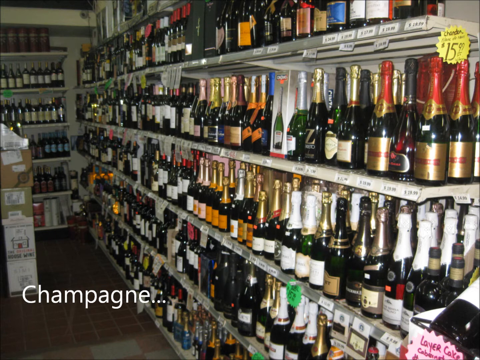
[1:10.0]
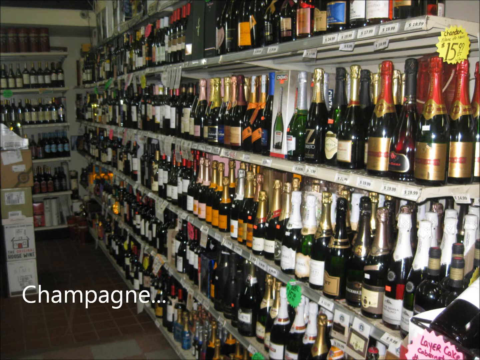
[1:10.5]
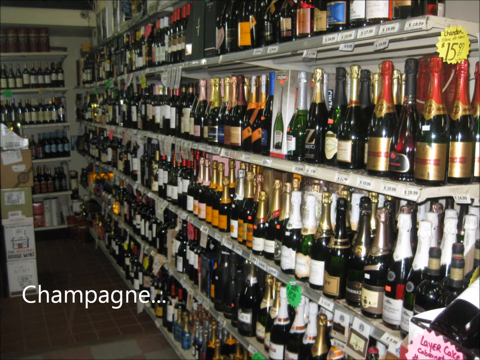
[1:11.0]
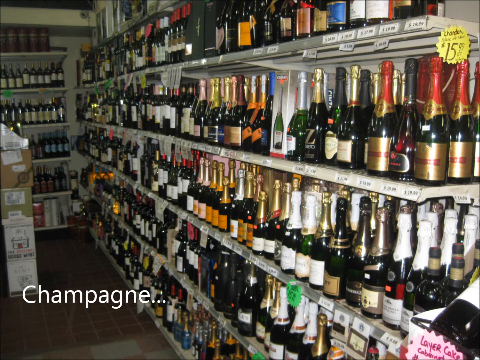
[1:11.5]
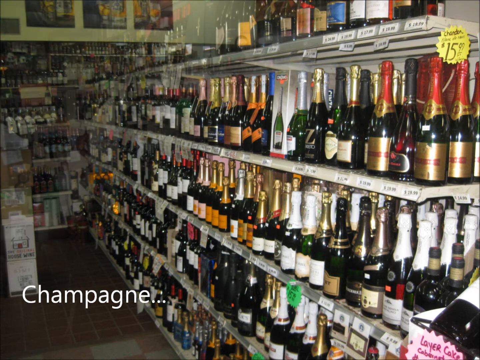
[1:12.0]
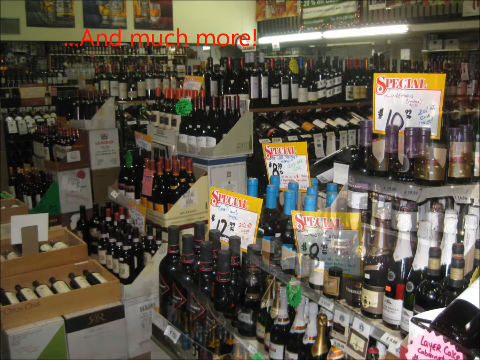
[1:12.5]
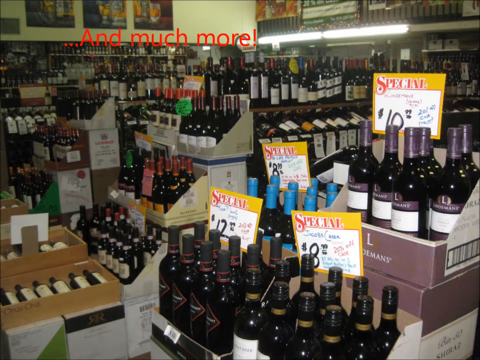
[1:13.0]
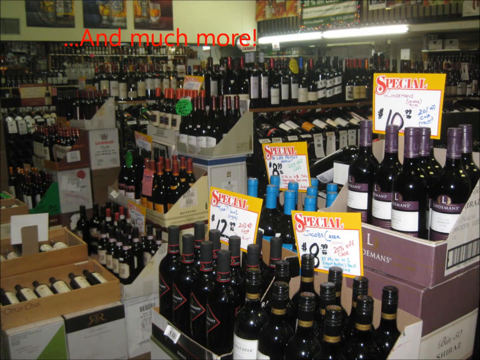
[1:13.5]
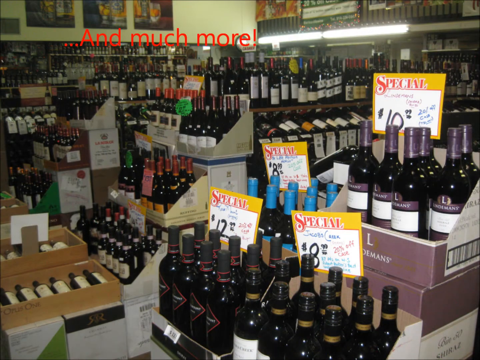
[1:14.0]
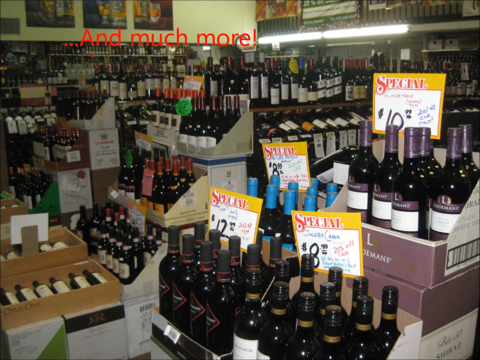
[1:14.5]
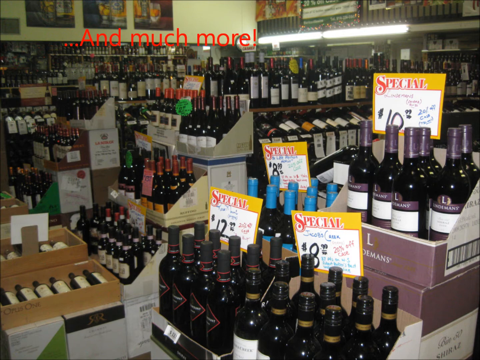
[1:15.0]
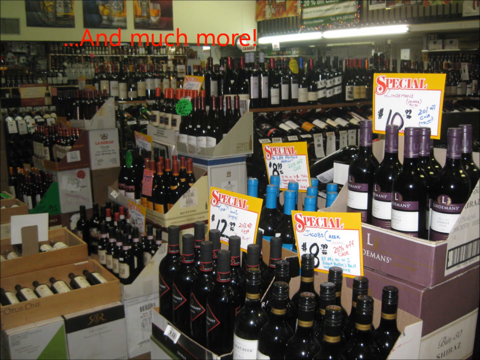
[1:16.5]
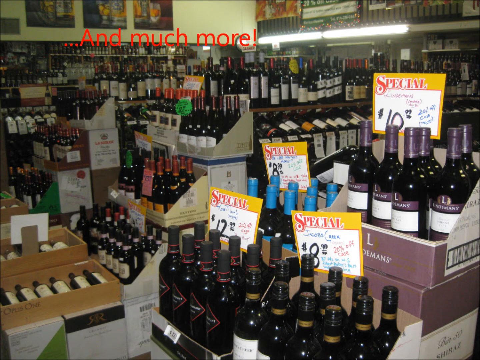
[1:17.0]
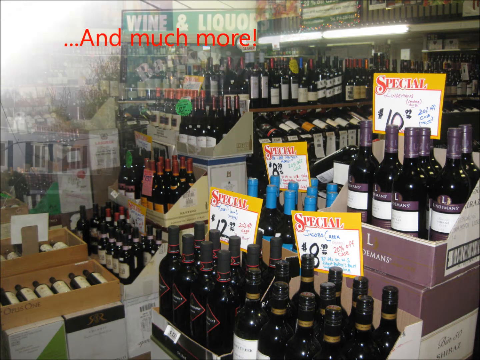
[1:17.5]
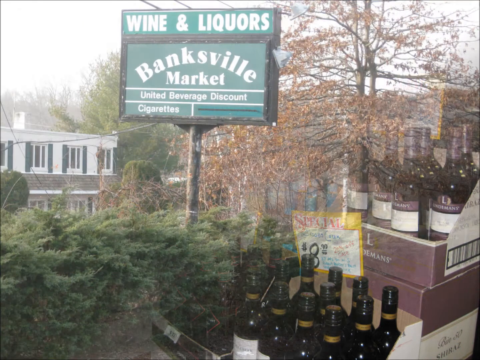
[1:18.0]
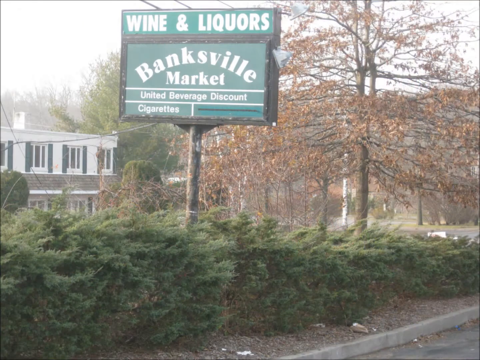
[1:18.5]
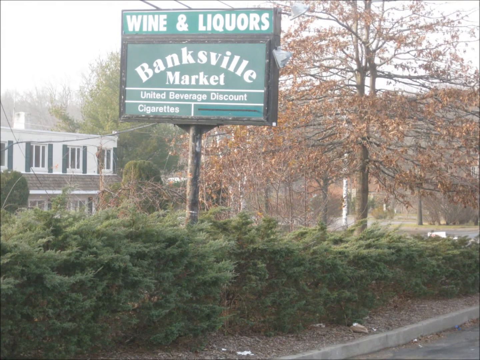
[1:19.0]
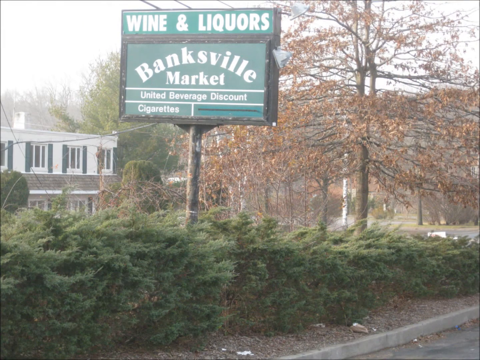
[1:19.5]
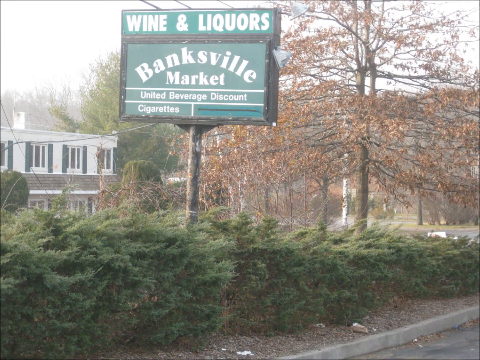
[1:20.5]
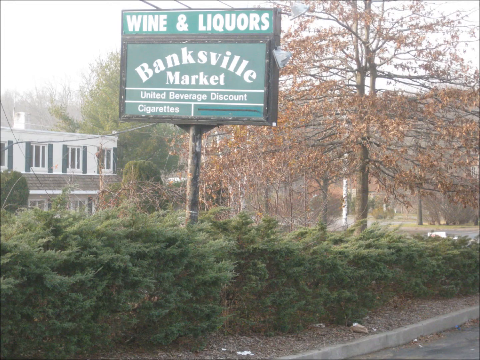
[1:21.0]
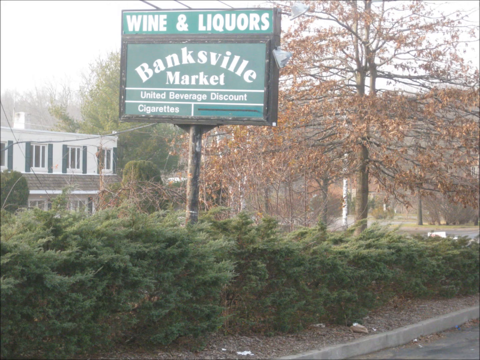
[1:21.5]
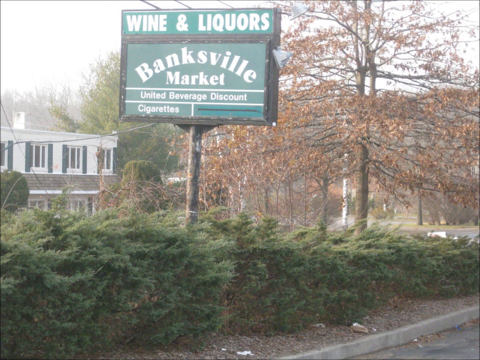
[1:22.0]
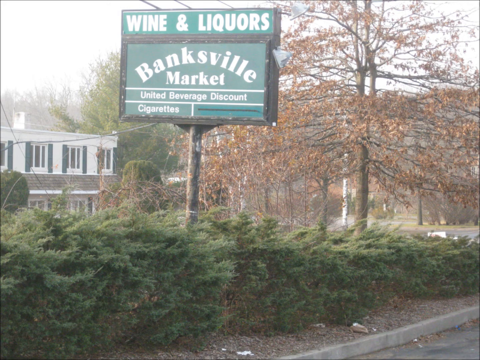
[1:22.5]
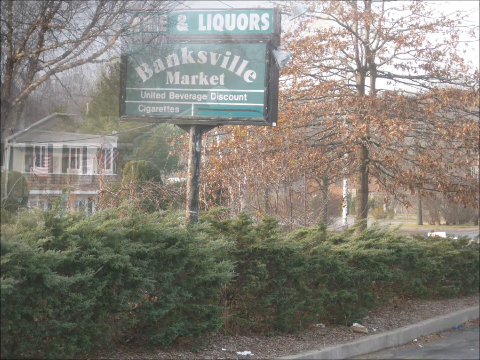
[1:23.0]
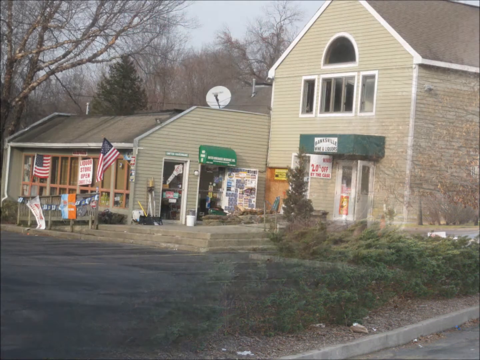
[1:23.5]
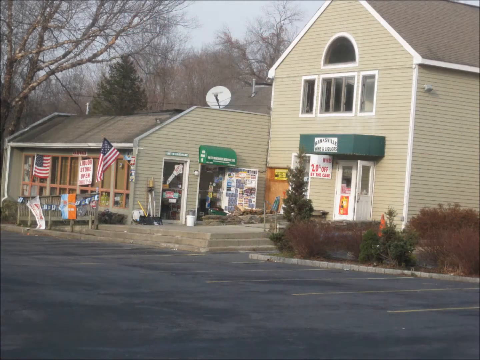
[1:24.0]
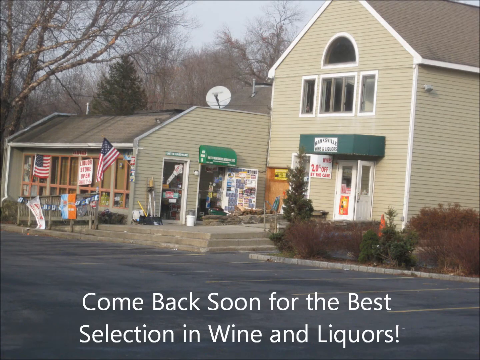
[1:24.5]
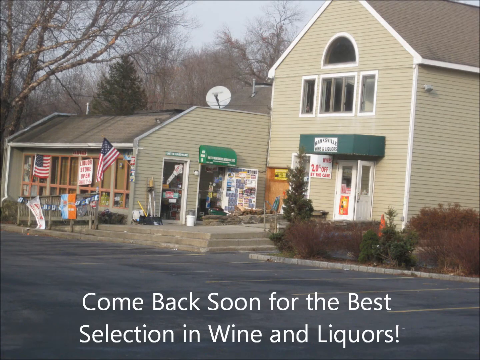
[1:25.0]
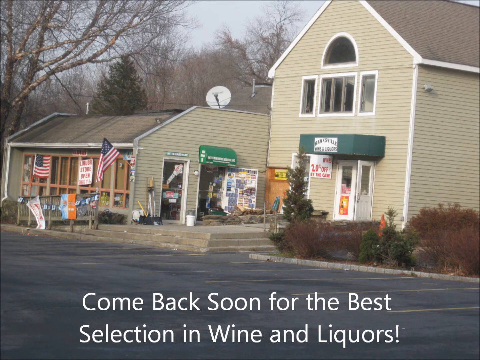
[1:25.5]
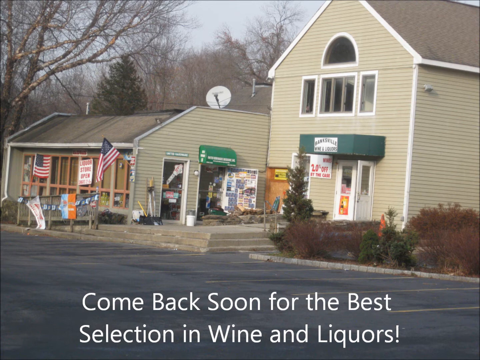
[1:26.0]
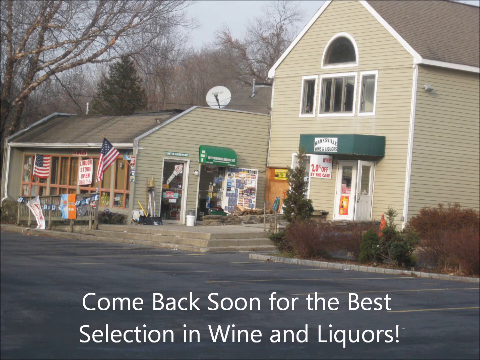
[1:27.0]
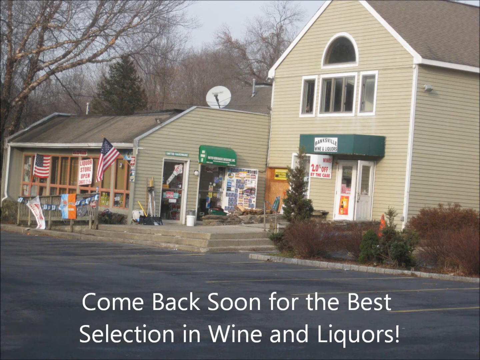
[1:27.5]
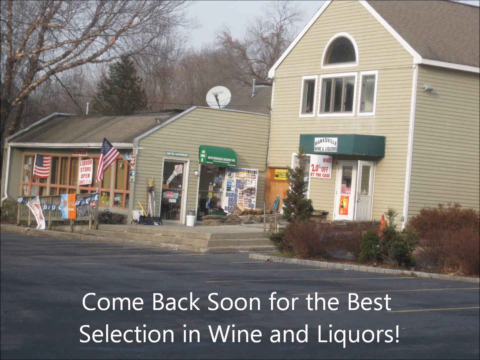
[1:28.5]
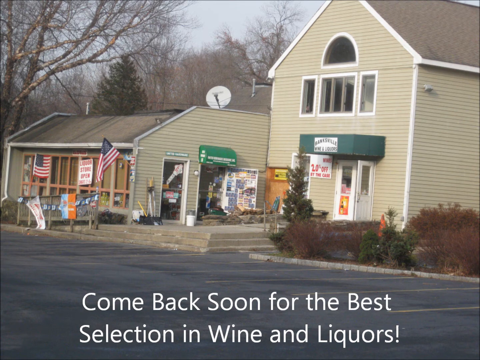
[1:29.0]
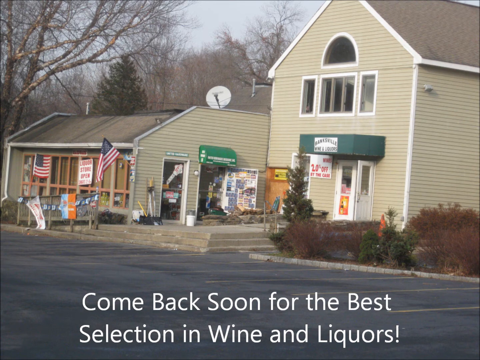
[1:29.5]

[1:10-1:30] The word "champagne" appears in white font in the bottom left-hand corner, so the champagne section is apparently being shown. The bottles have different colored lids: some red and gold, some white, some black, some blue, some sort of purple and some sort of pink. The view flips to another image with red text reading "...And much more!" Signs read "special", "$10", "$8" and "$12" on products that appear to be the same brand, together on a shelf in boxes.